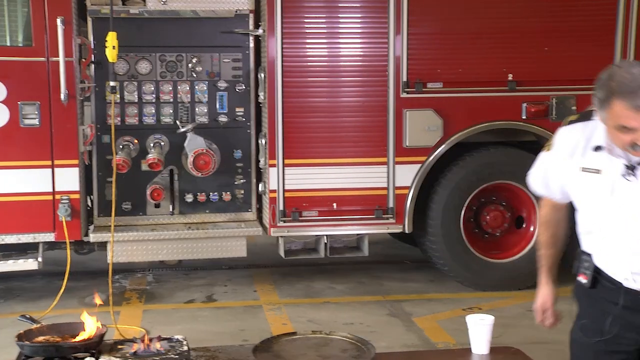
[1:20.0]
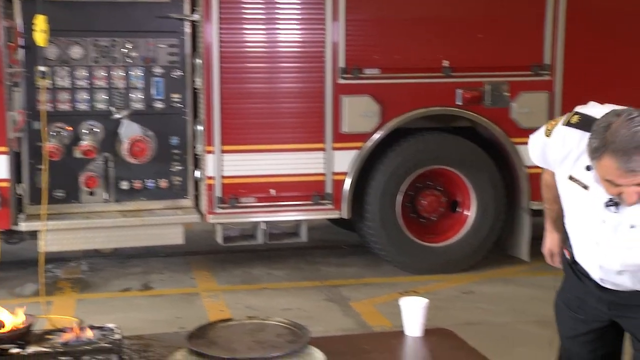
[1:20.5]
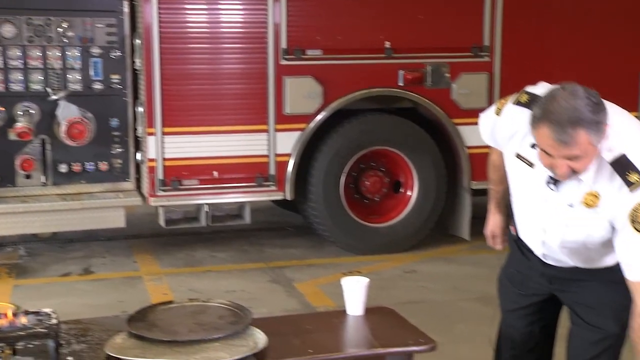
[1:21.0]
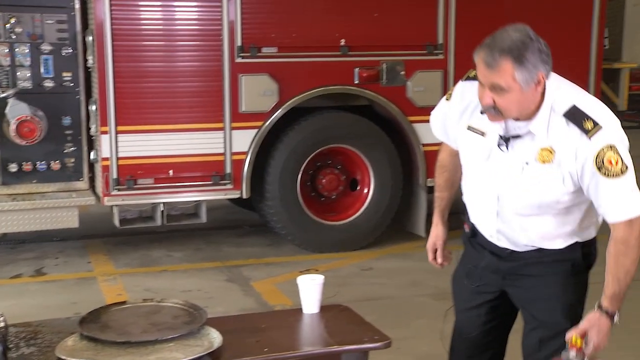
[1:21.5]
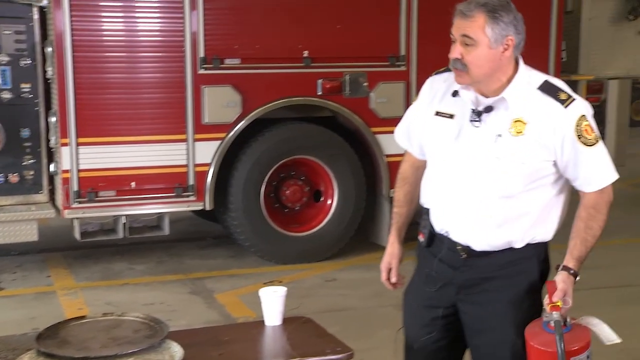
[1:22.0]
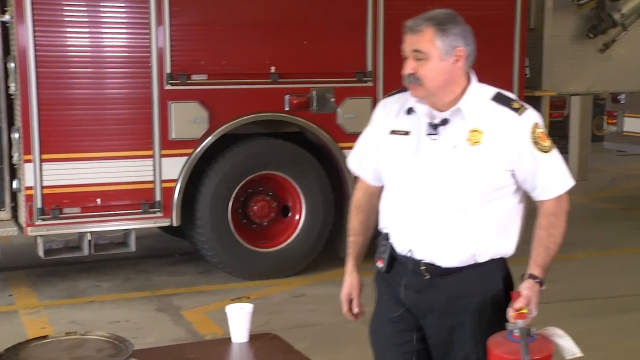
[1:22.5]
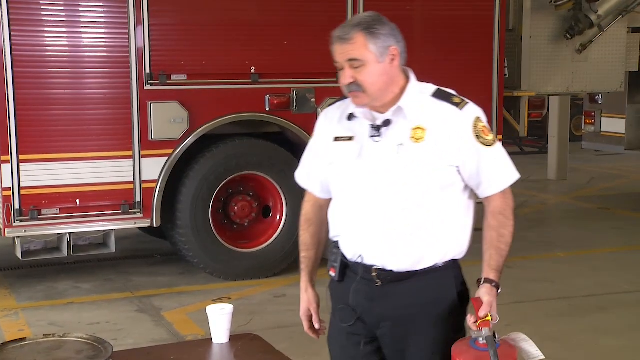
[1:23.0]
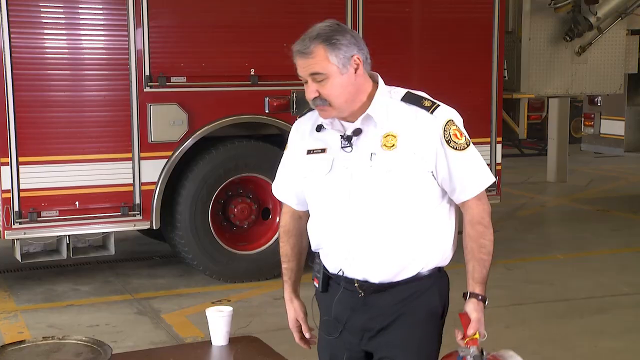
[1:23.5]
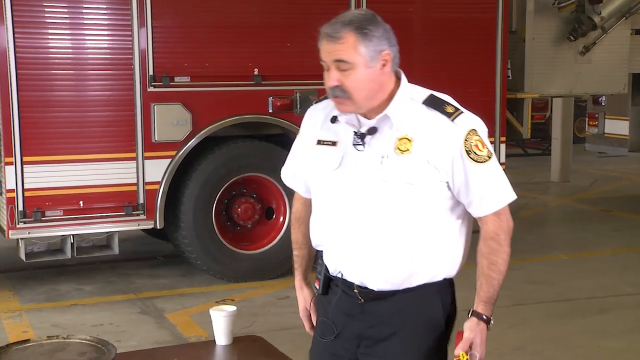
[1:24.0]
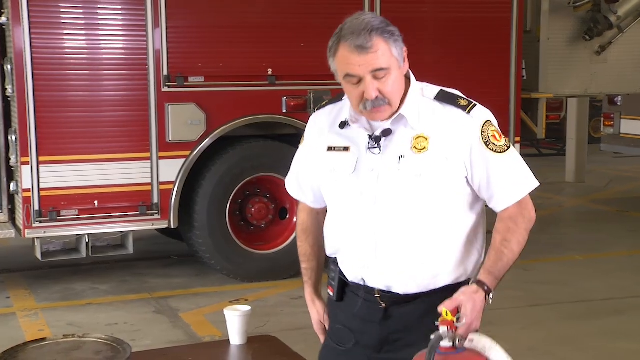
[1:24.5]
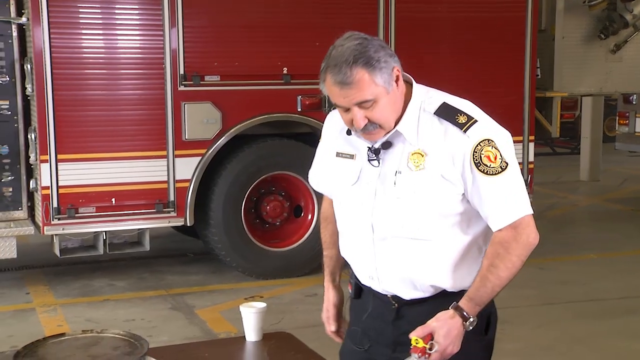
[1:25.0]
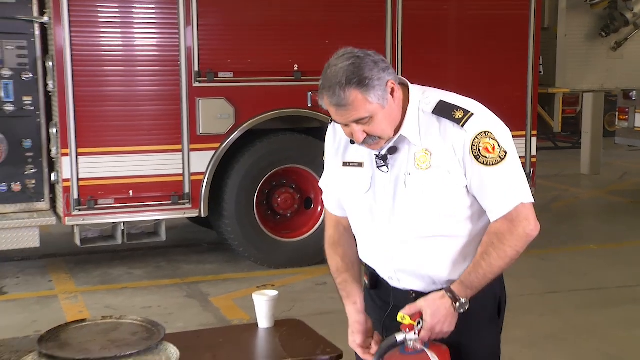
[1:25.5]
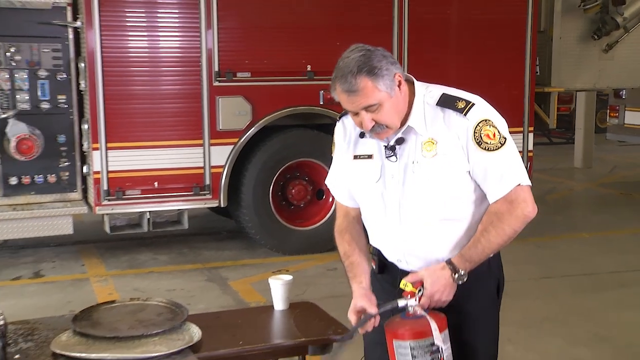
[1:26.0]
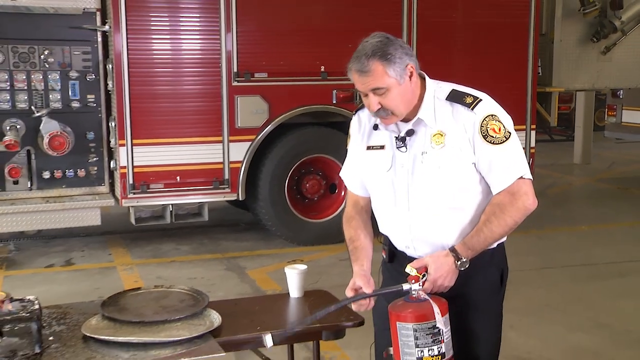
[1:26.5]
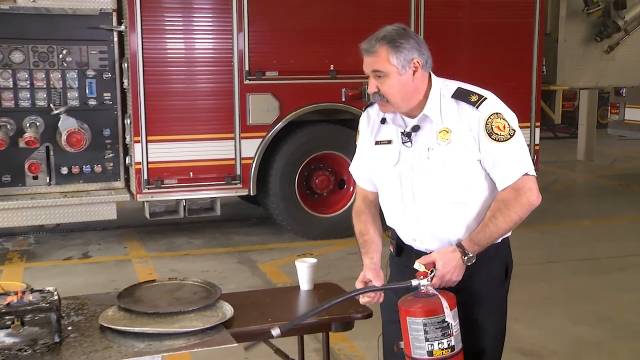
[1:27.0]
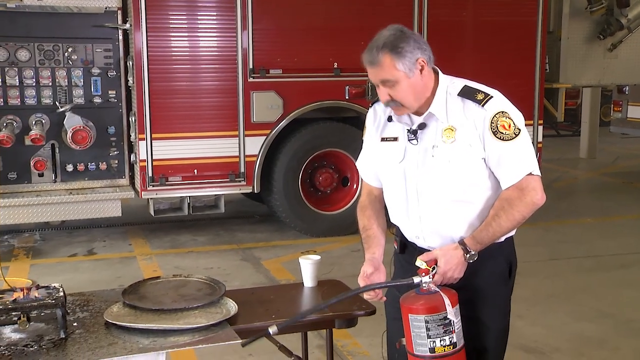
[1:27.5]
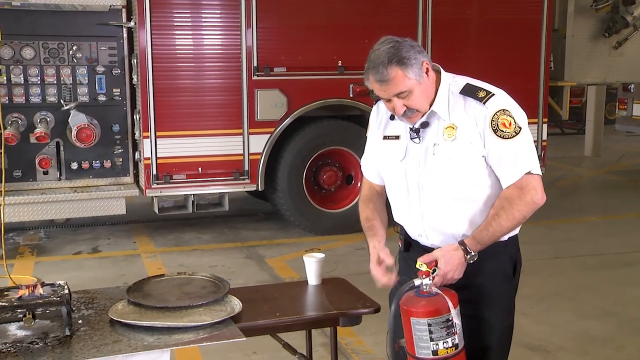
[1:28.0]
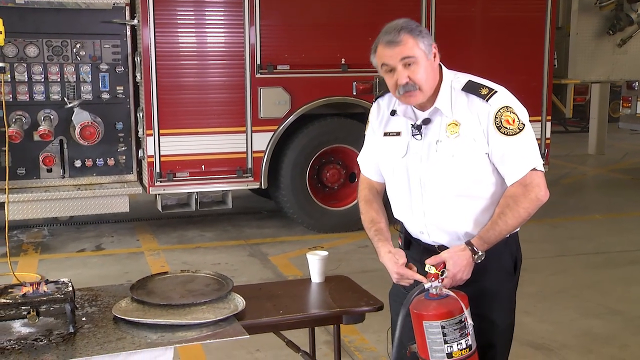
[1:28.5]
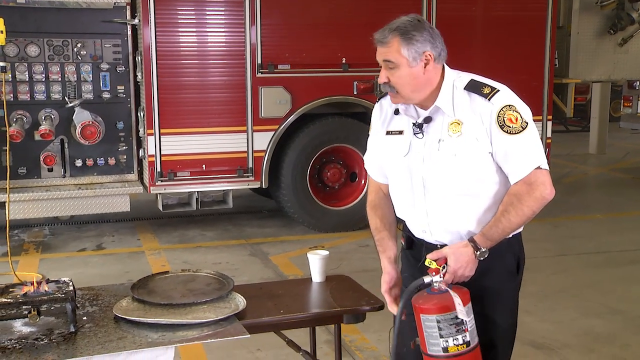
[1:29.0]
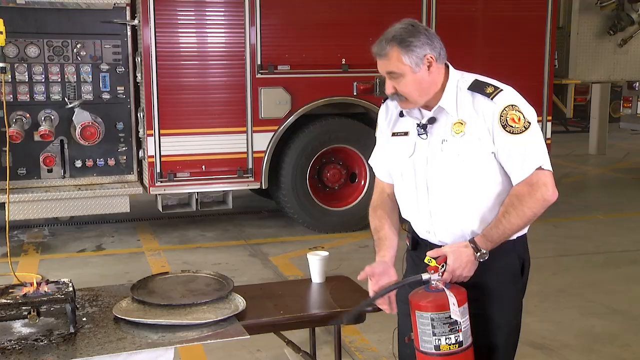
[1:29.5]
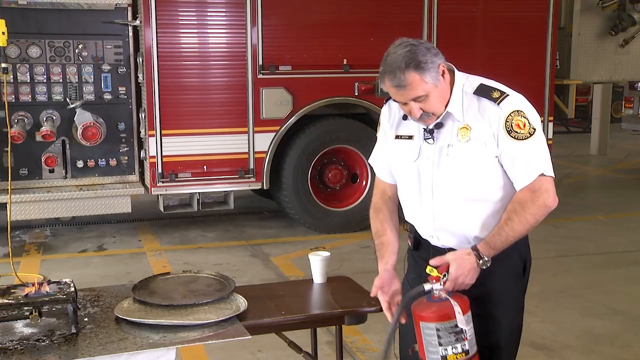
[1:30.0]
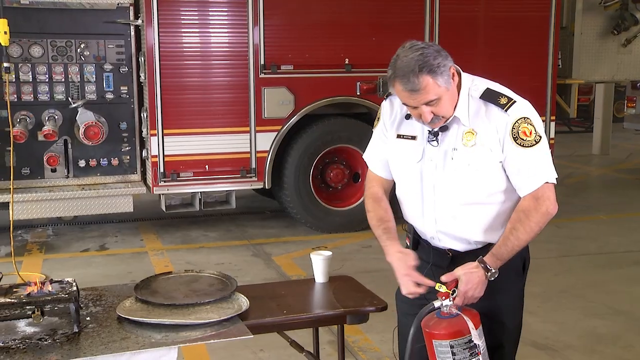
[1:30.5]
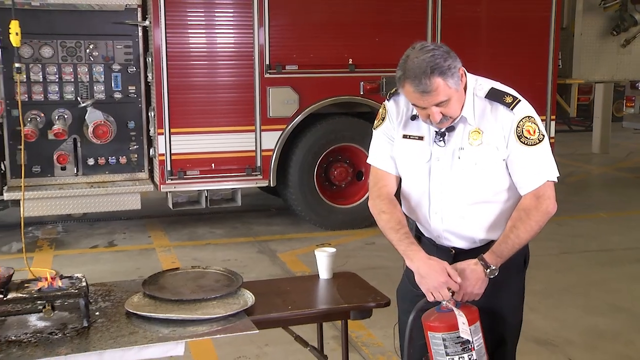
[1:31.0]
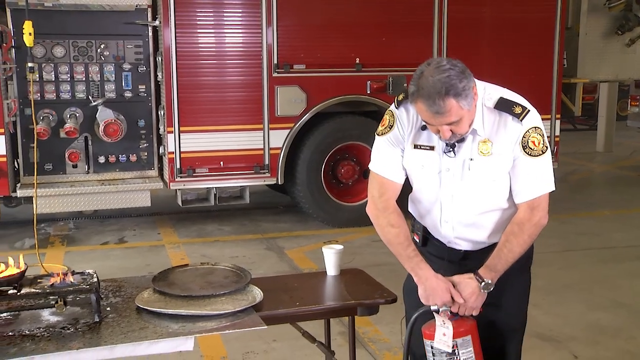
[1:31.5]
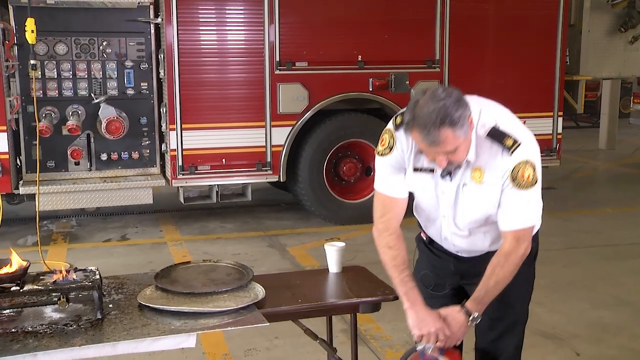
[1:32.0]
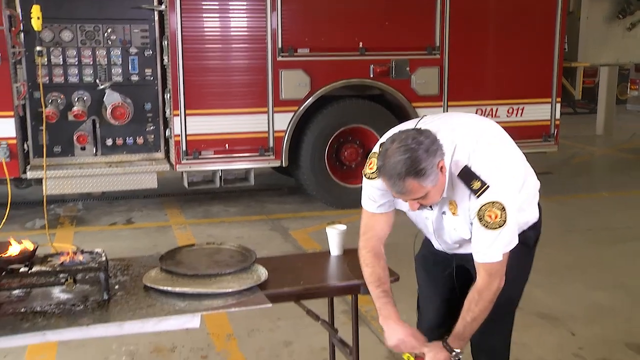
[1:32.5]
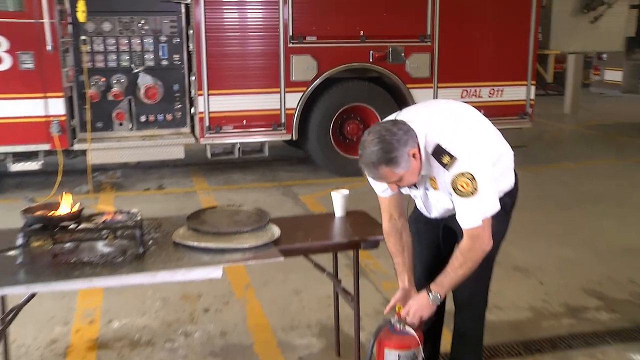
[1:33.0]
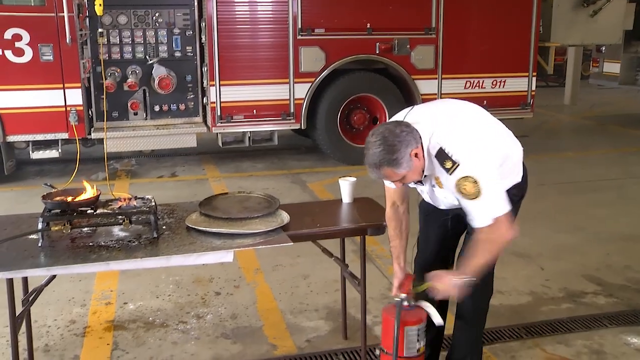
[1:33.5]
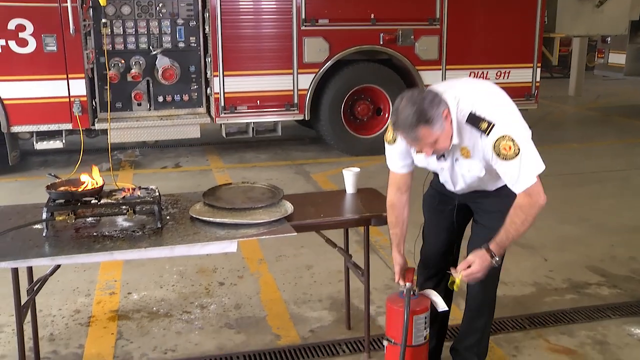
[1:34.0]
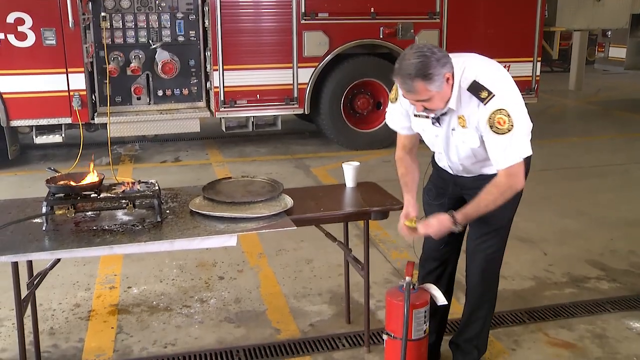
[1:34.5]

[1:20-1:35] At the front of the table, the assistant fire chief leans down and picks up what looks like a very large commercial fire extinguisher. He points at the nozzle, picks up the hose, showing where to hold it and depress, then sets it down again and pulls the safety pin.